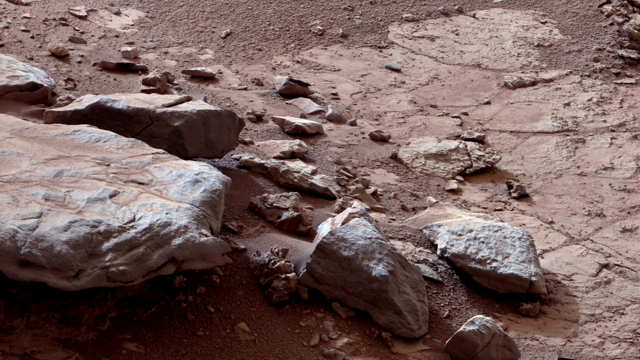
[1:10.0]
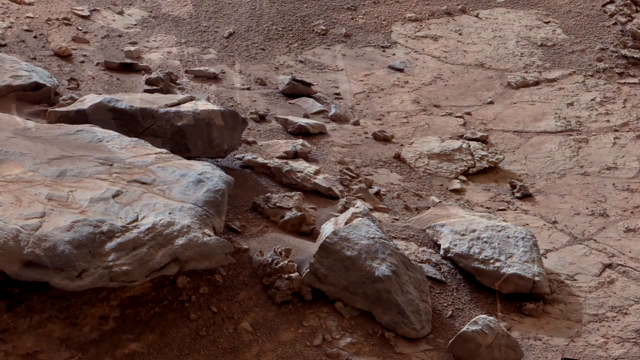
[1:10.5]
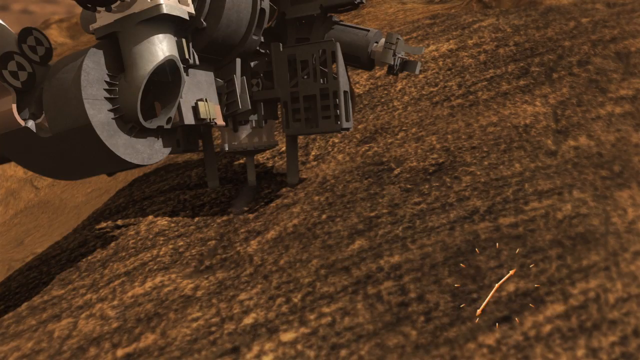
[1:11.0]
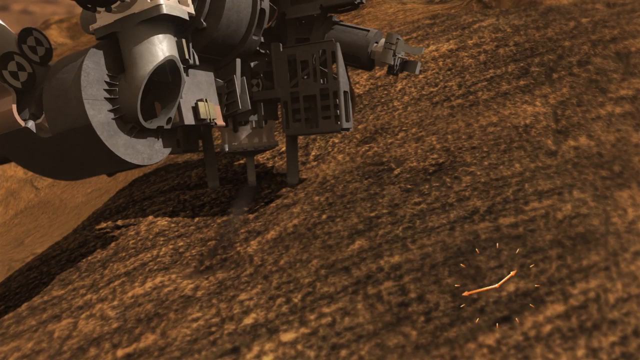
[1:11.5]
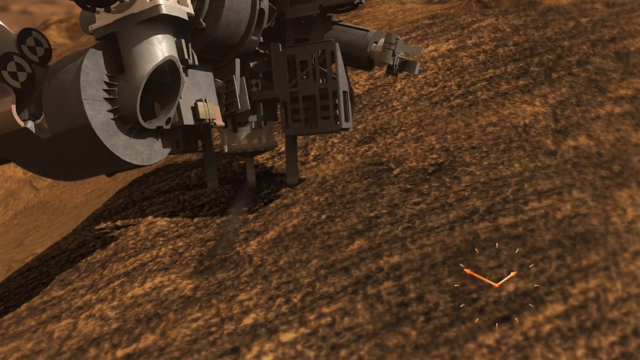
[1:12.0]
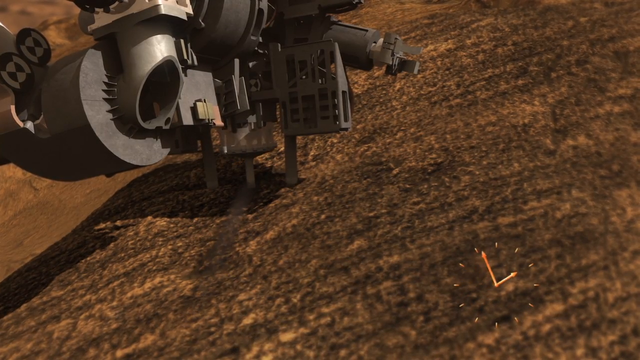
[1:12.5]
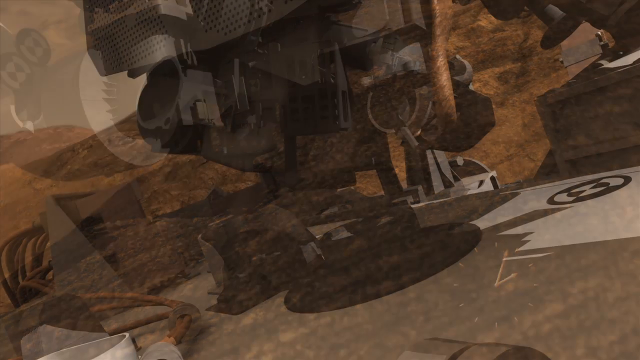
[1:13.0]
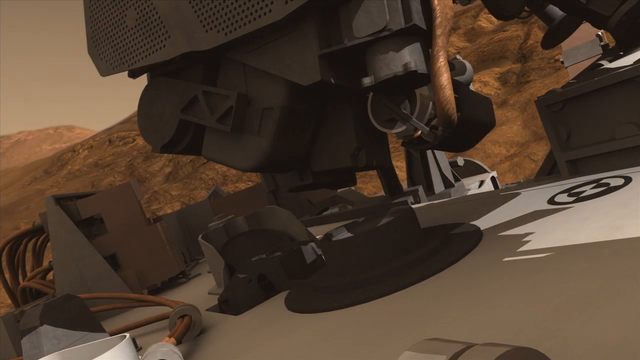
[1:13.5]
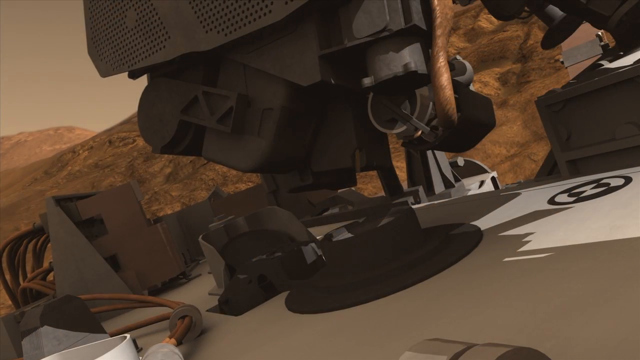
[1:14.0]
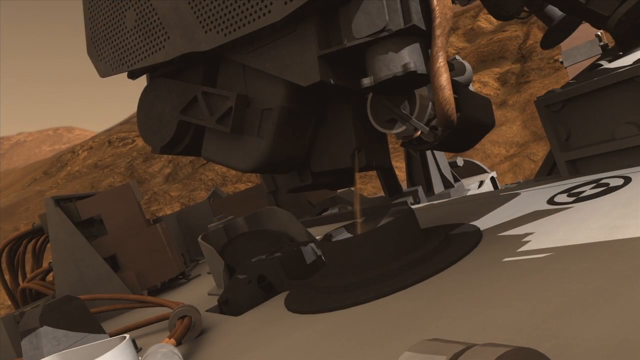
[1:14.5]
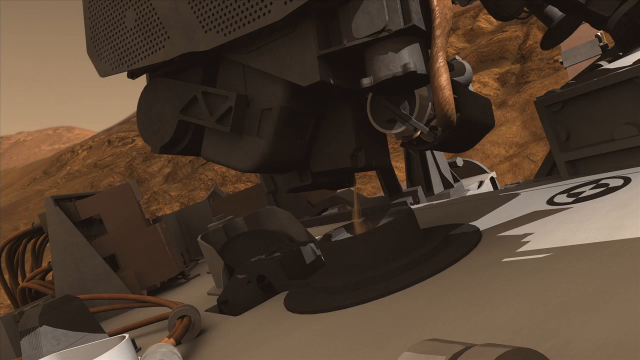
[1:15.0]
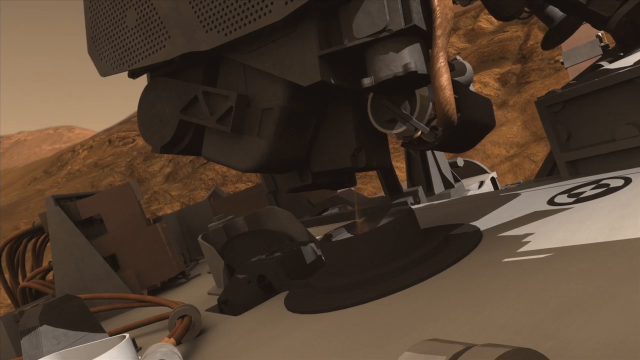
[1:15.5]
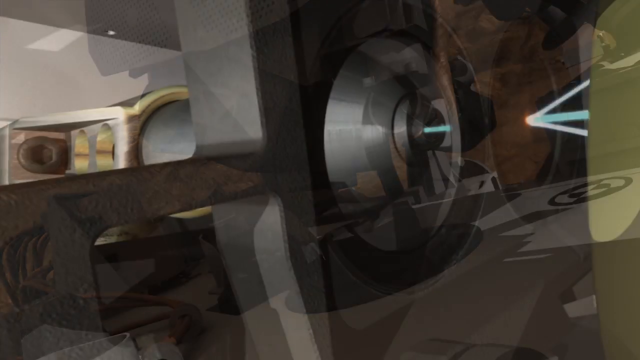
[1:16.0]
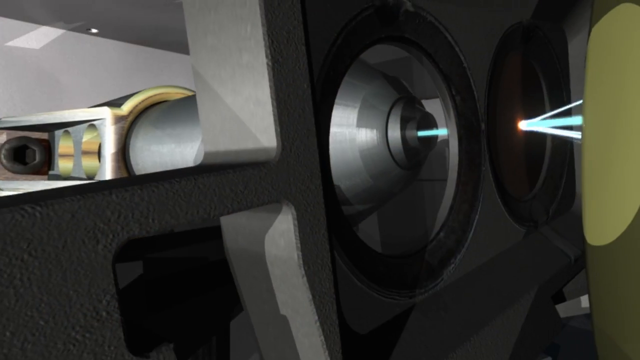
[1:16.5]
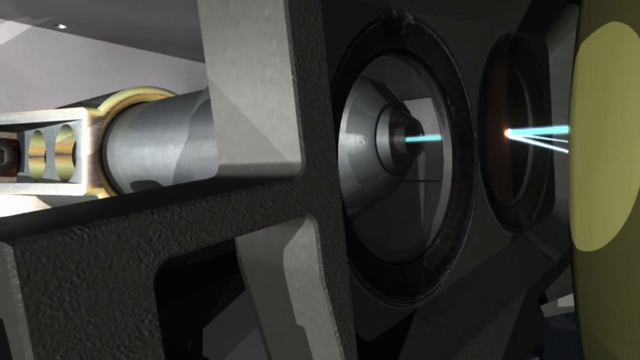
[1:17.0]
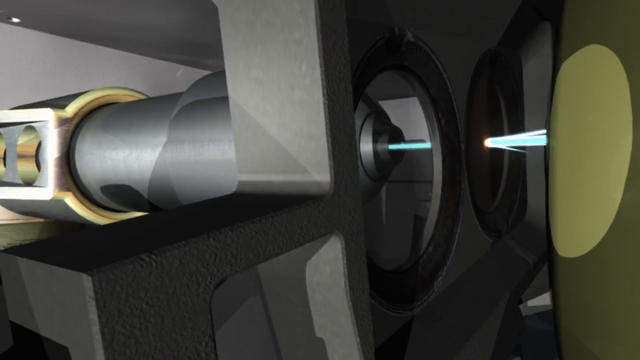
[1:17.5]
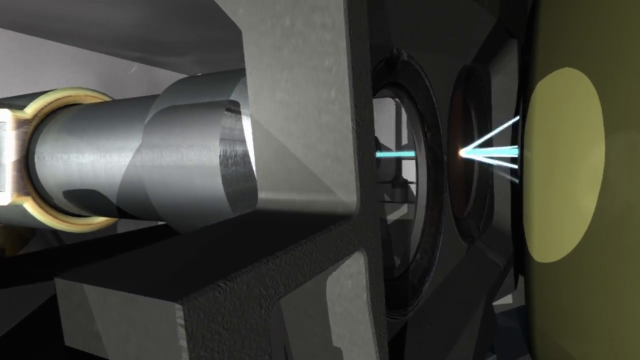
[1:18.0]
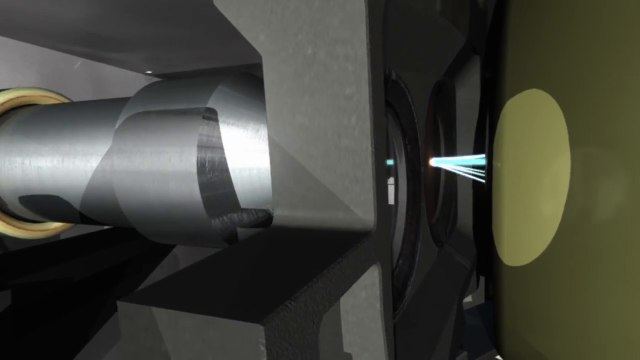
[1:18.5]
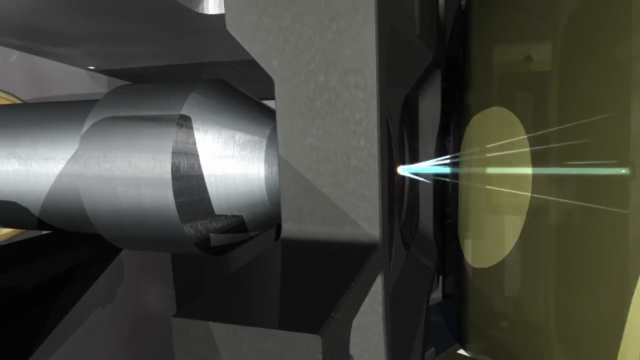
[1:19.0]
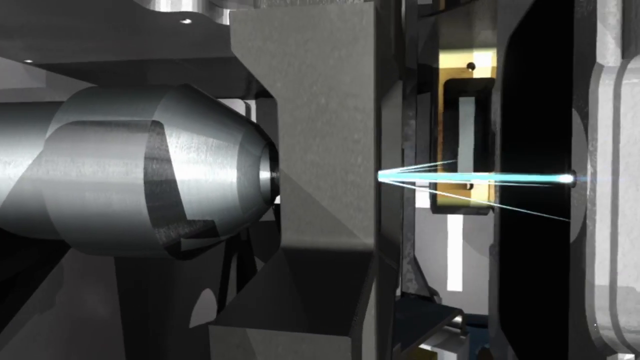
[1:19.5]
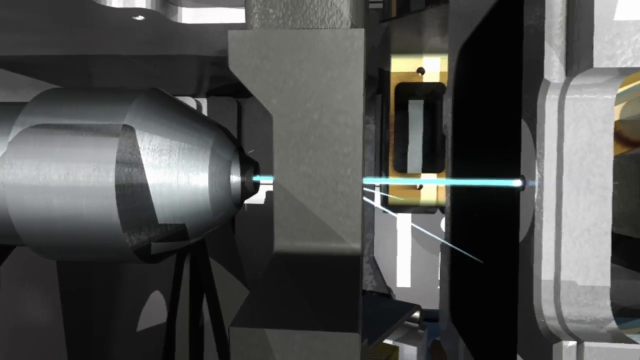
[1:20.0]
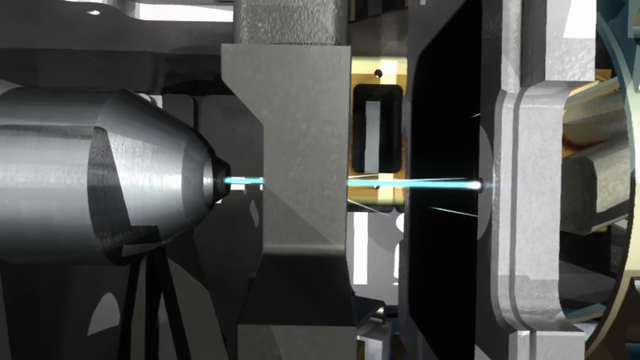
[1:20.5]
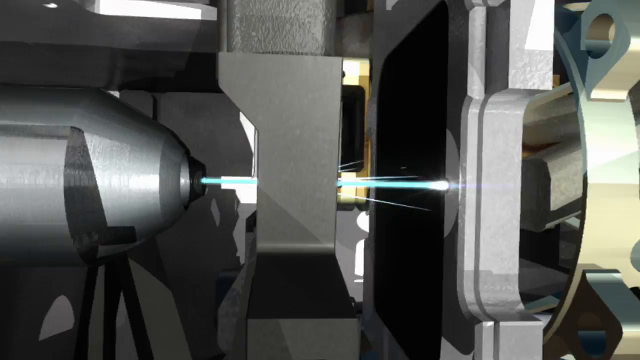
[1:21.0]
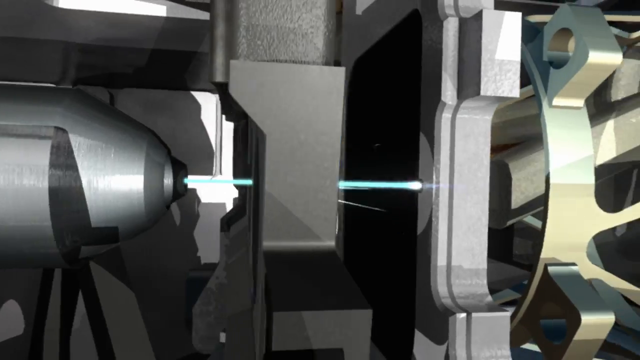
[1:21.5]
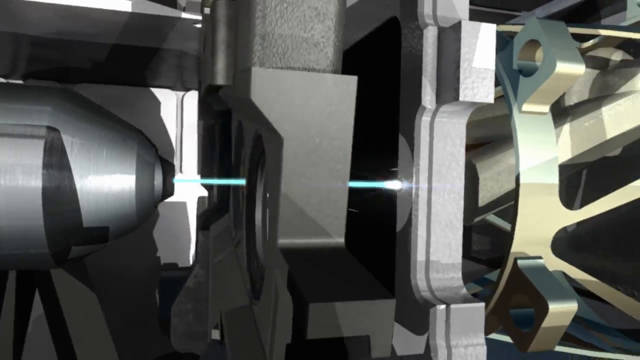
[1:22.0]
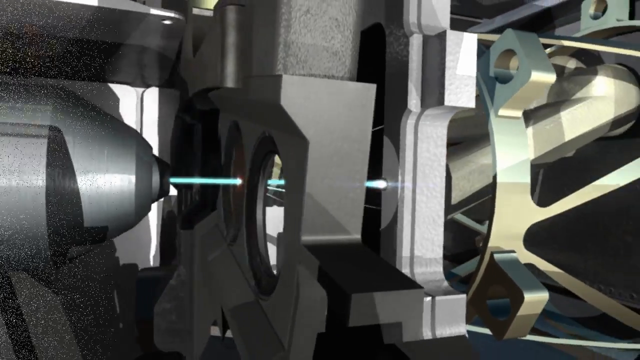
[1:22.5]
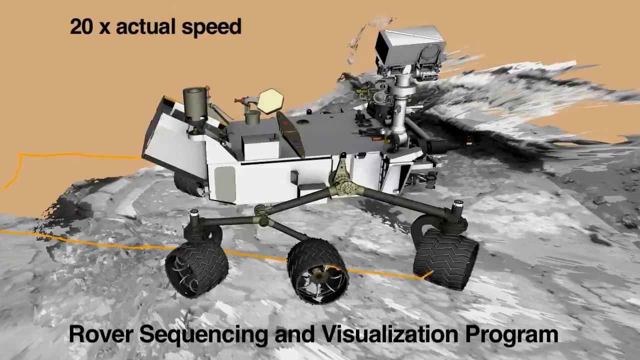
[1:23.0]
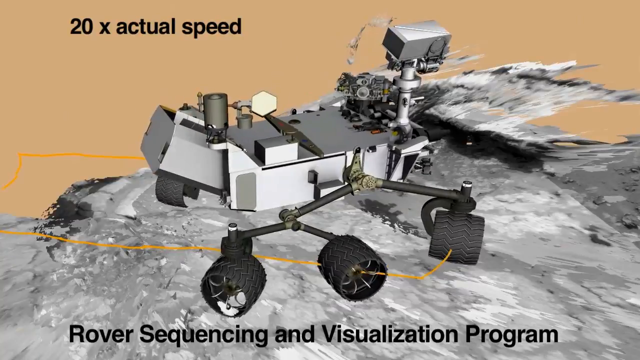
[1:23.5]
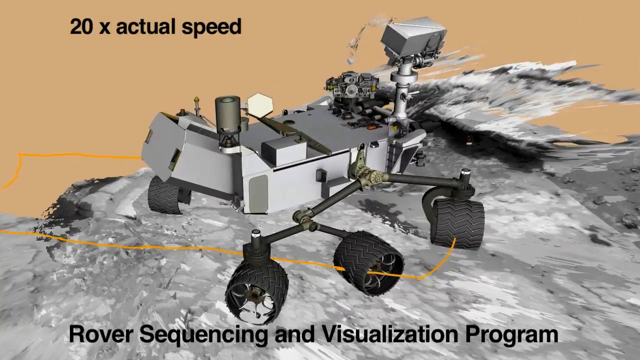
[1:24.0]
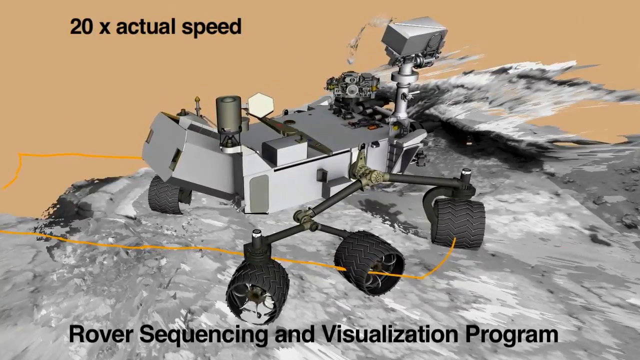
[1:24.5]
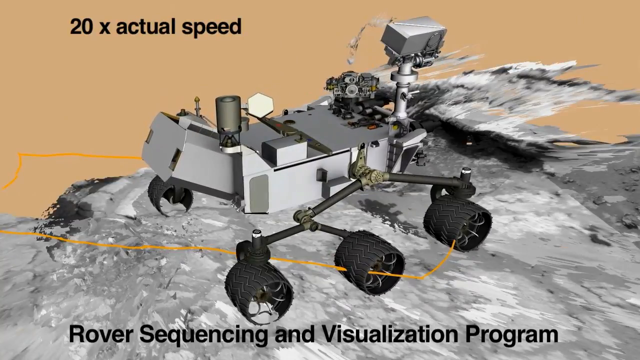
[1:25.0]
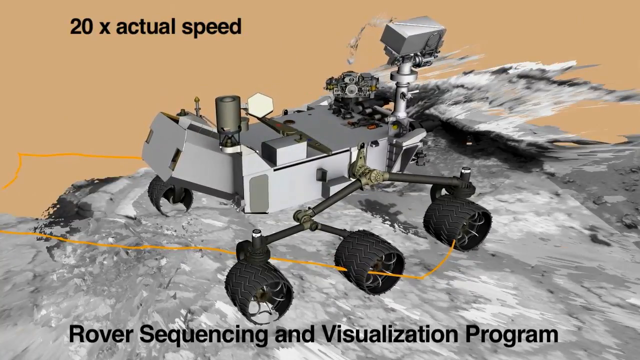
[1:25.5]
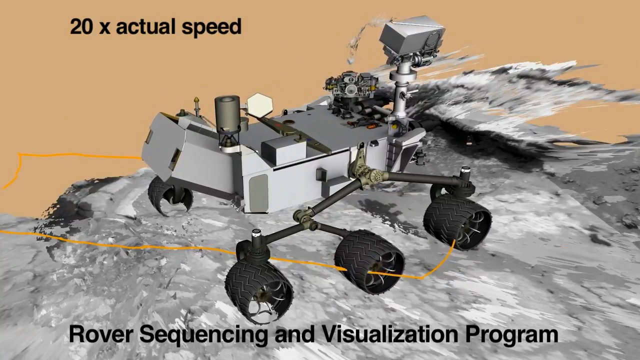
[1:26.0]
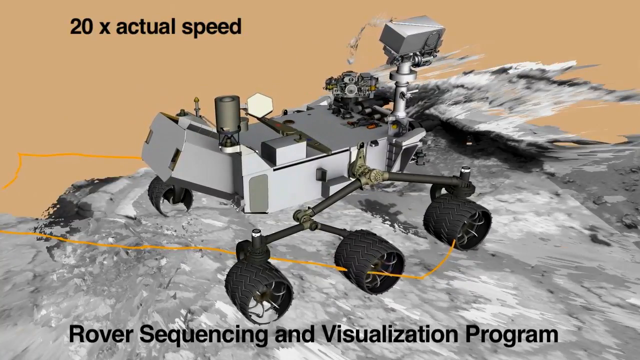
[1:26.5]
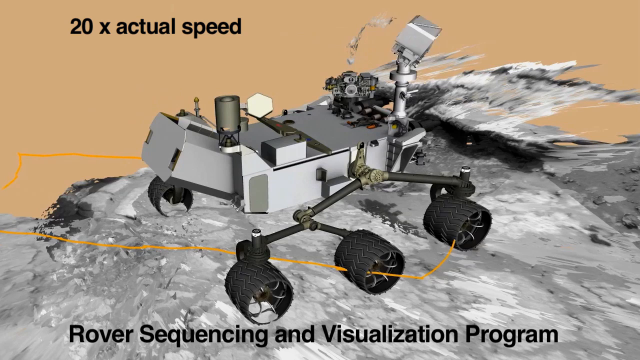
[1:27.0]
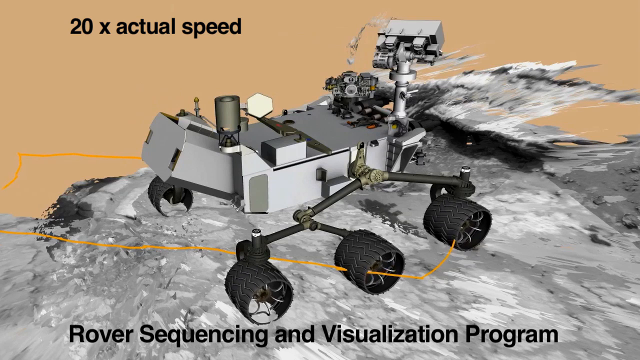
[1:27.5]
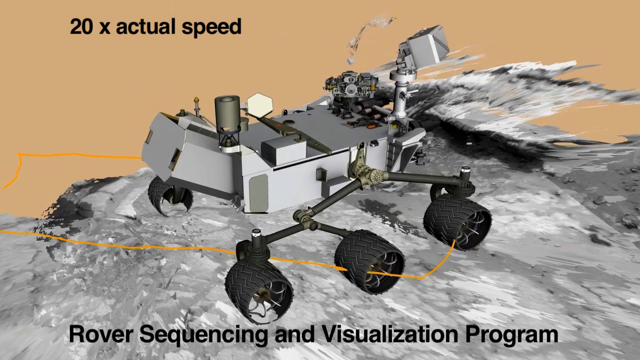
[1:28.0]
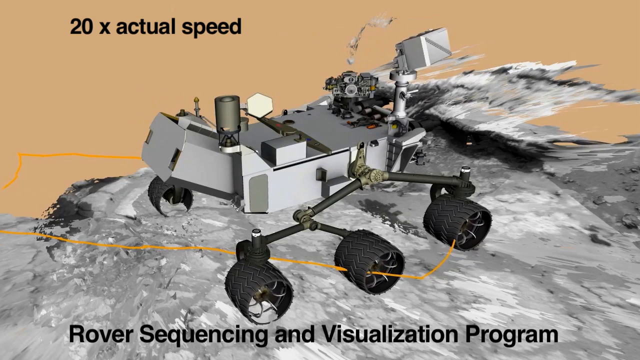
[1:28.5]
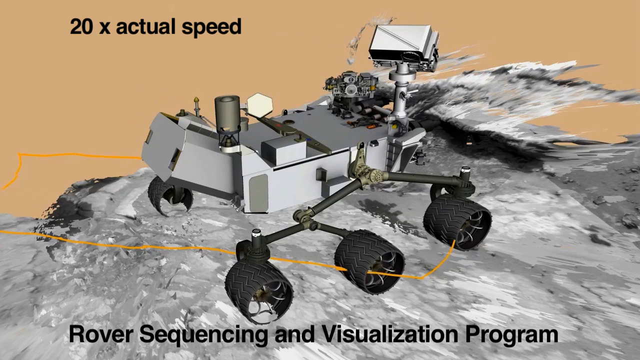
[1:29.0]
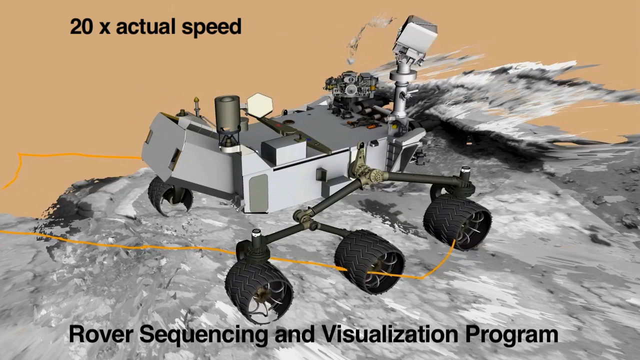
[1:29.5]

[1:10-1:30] An animated feature of the Mars rover is labeled "20 times actual speed" and "rover sequencing and visualization program". It shows a camera affixed to the top of the rover looking around at different angles, and what appears to be a laser that apparently also views what it is looking at. The wheels appear to be spinning at the bottom. Various cut scenes show the exterior of the rover, focusing on parts that are hard to identify. In another section the rover turns slightly and the entire rover is visible: wheels, legs, arms, body and everything on it. Other shots are closer up toward the body, and it is hard to distinguish exactly what the parts are or what their purpose is.